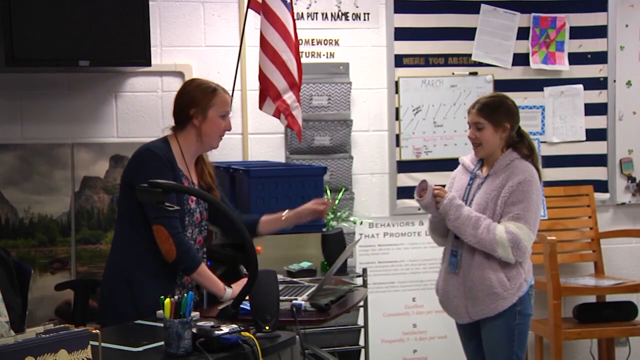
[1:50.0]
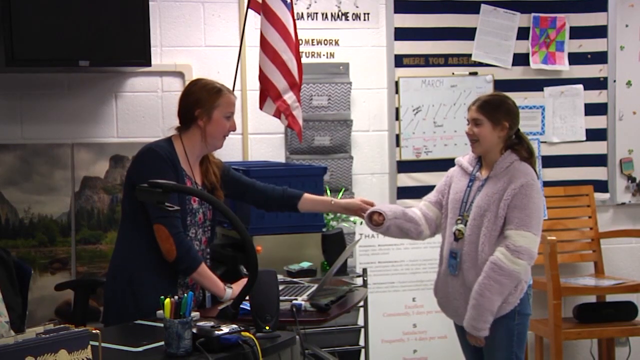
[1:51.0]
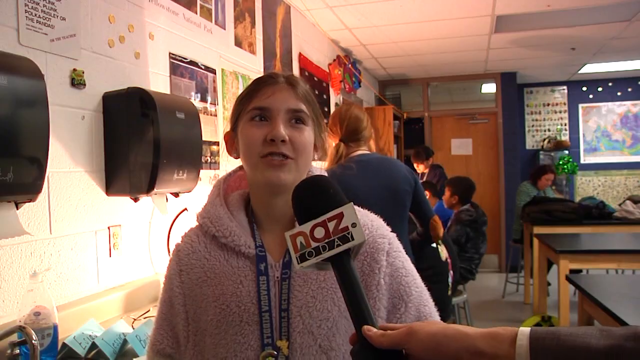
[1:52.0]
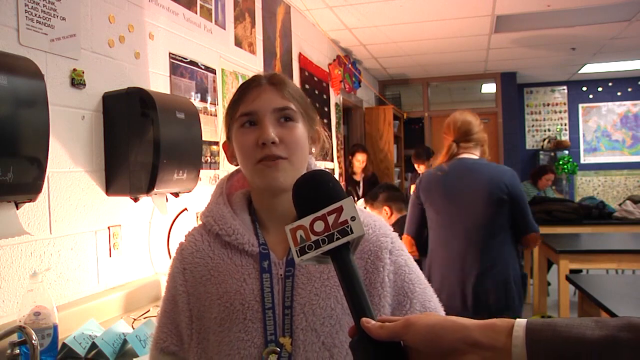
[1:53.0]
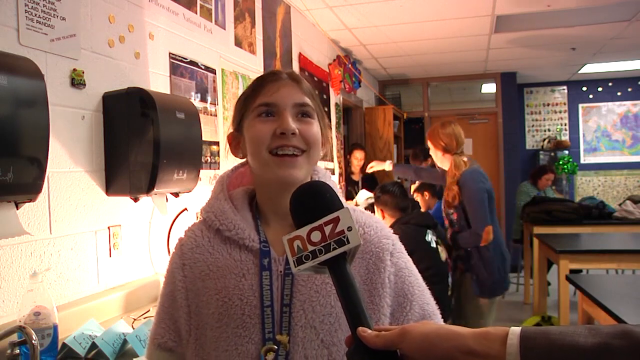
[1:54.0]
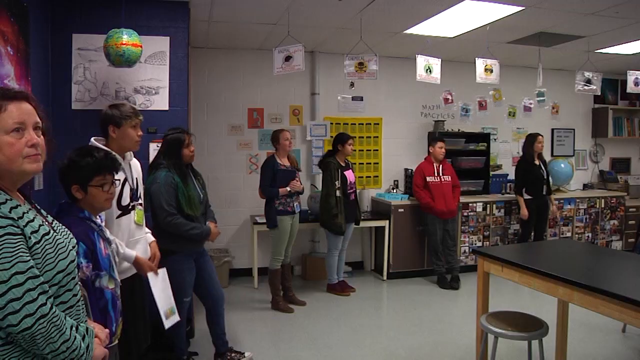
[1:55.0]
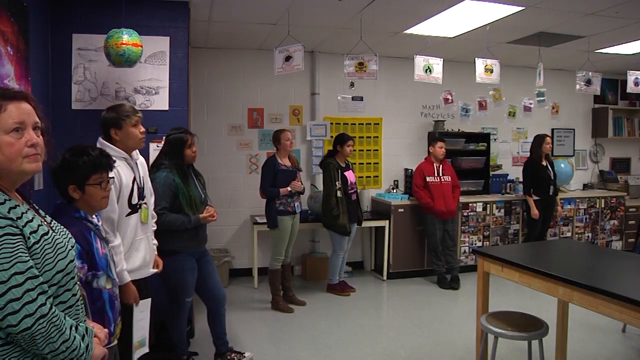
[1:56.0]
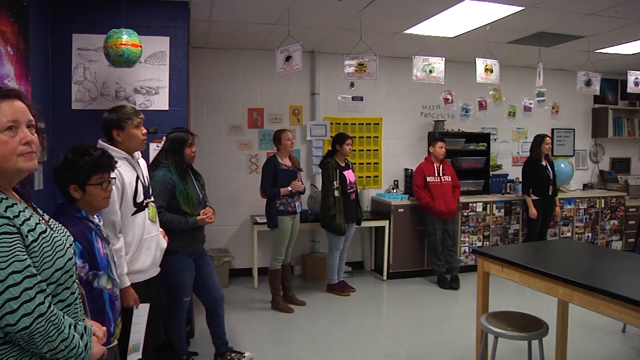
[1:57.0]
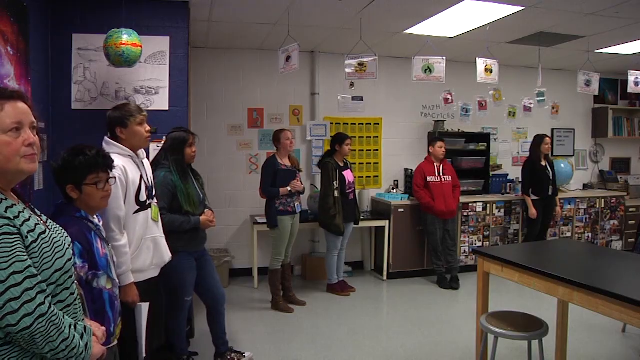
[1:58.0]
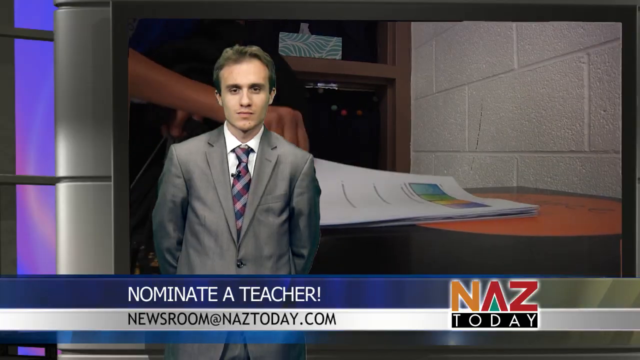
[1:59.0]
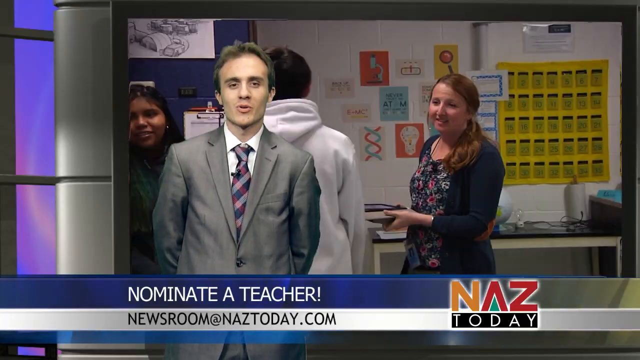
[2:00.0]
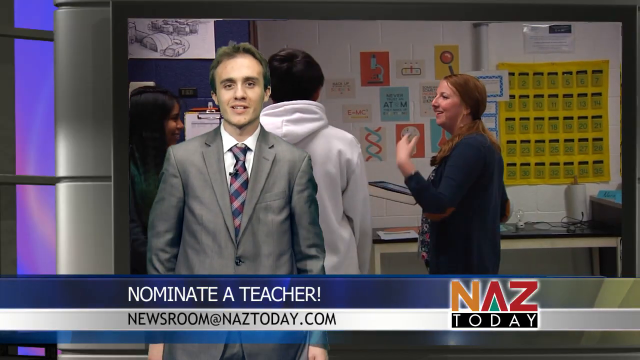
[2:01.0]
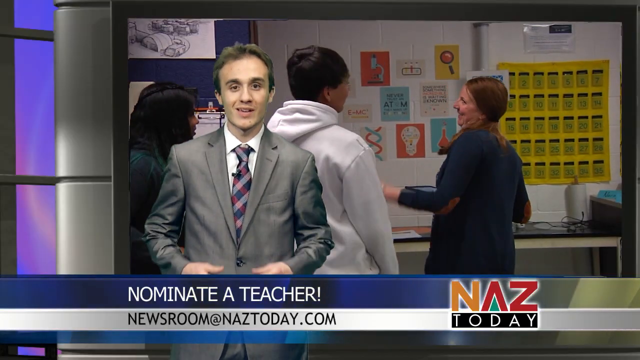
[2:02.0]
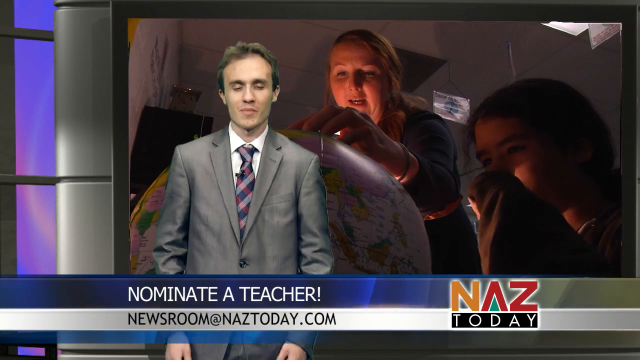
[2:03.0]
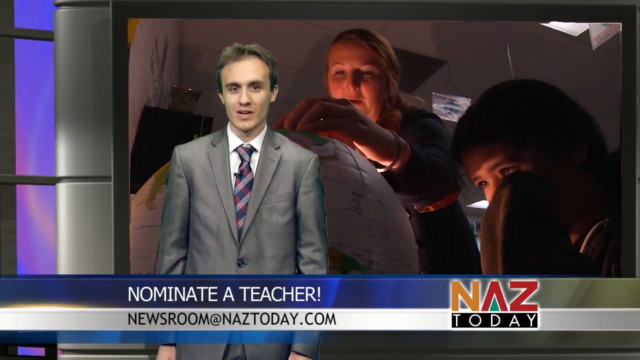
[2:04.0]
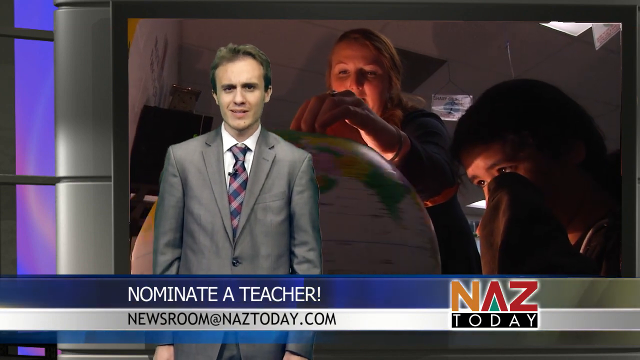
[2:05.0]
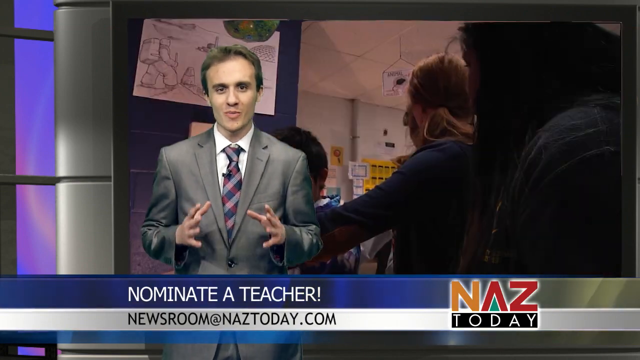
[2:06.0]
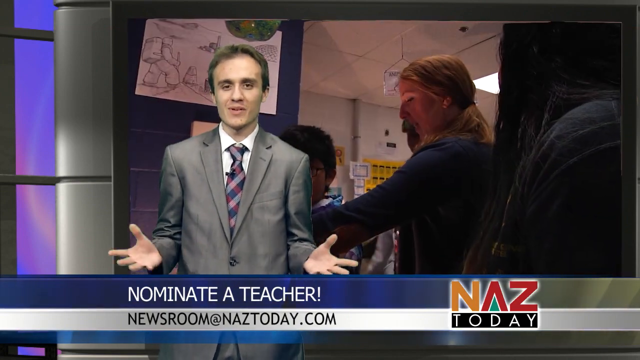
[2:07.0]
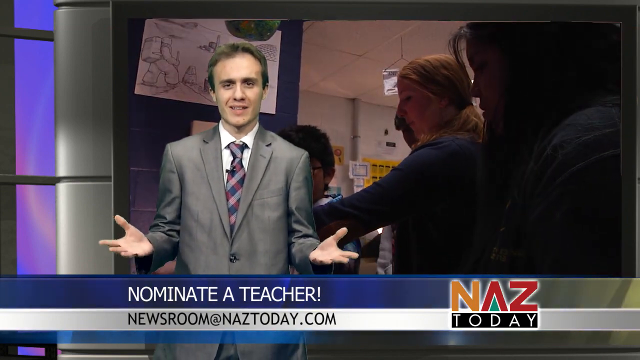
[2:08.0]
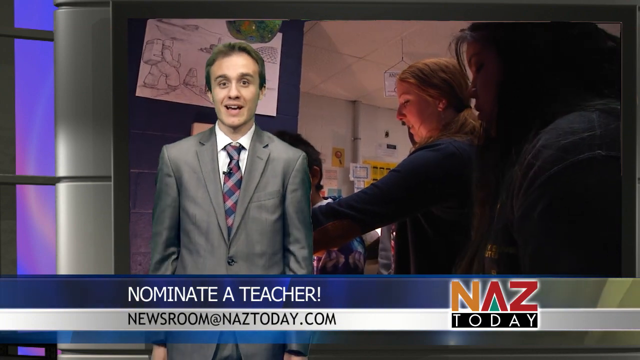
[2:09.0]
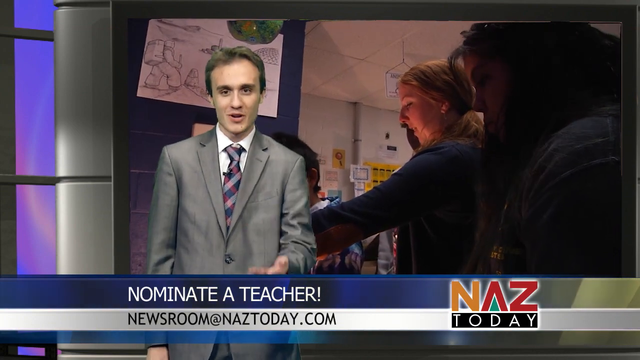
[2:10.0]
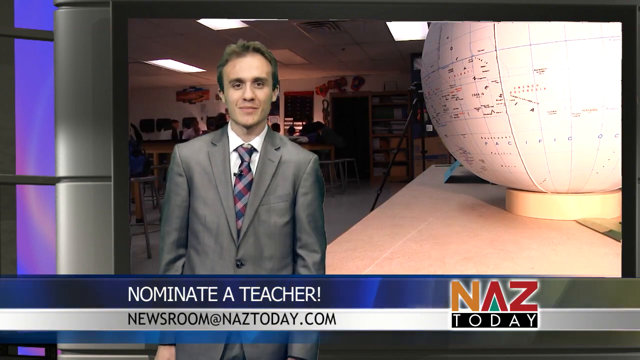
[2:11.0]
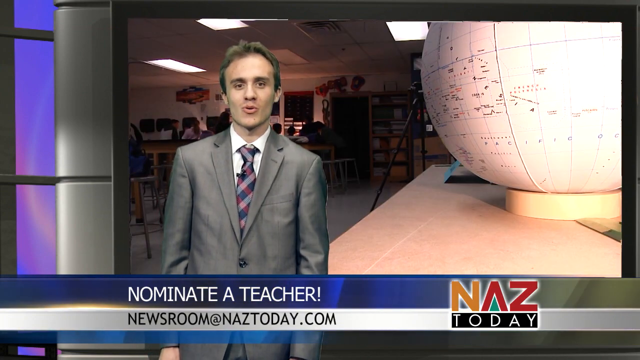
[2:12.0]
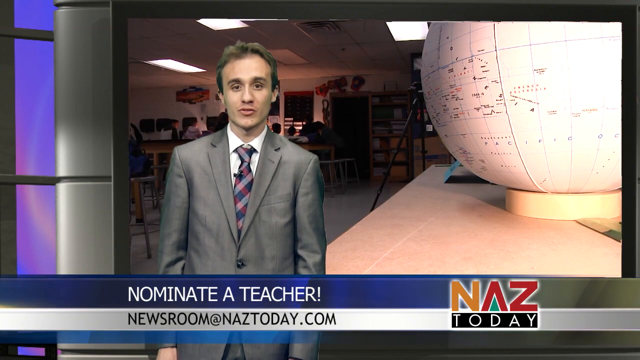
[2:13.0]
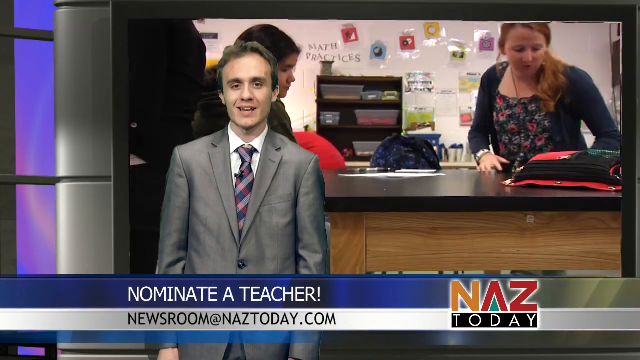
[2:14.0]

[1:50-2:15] A woman with Caucasian skin and red hair stands opposite a Caucasian woman with brown hair wearing a pink jersey. The red-haired woman stretches out her hands, and the student in the pink jersey stretches out her hands as well, as the red-haired woman feels the texture of her jersey. She then opens her mouth in disbelief. The scene cuts to the woman in the pink jacket being interviewed, a black microphone in front of her as she speaks and smiles. Next, a classroom shows students standing in a circle formation, with items such as a globe and different posters across the room. The scene shifts to a TV station, where a video of the events plays on the screen behind a man wearing a grey tuxedo, a white shirt and a multicolored tie. As he talks, a caption underneath says "Nominate a teacher", and the website "newsroom at nowstoday.com" is shown below it. He keeps talking as the video plays behind him, gesturing by lifting his hands and moving them in a circular motion. The scene ends with a picture of a globe behind the man.